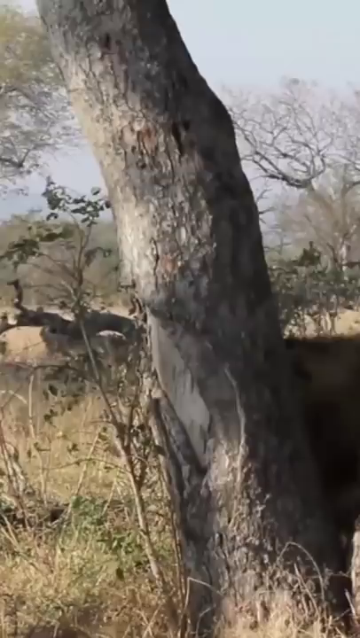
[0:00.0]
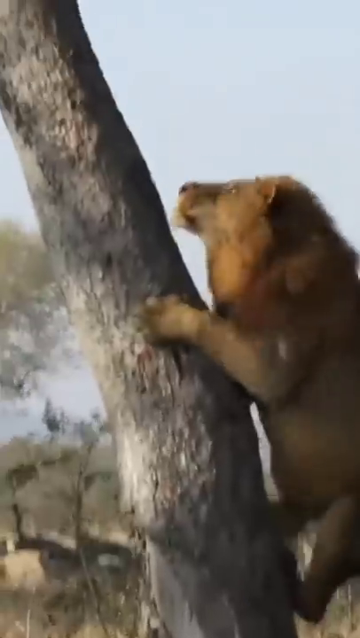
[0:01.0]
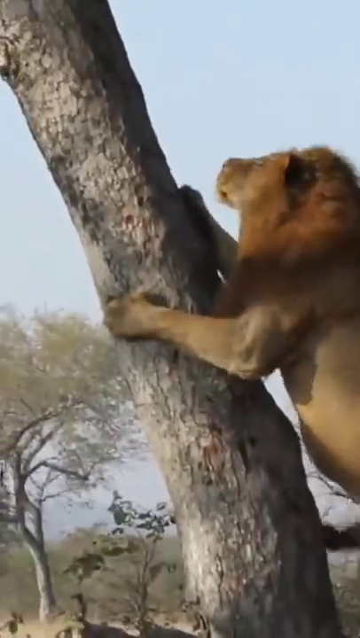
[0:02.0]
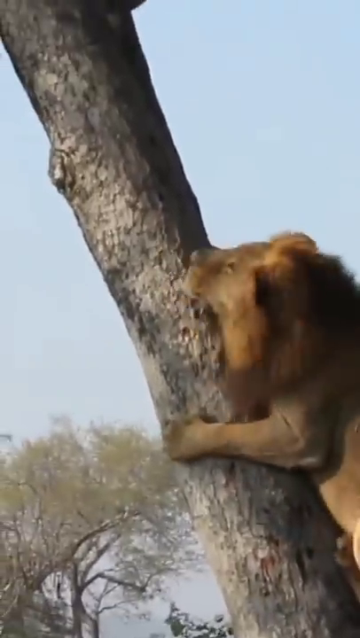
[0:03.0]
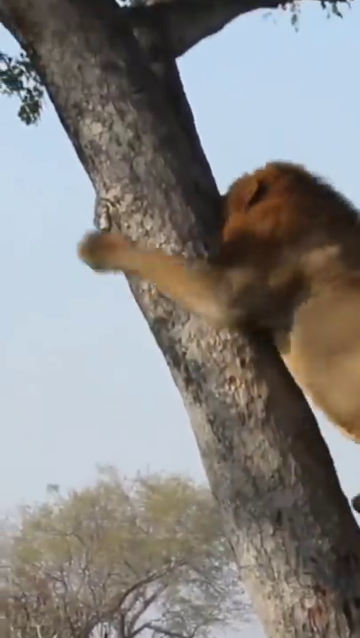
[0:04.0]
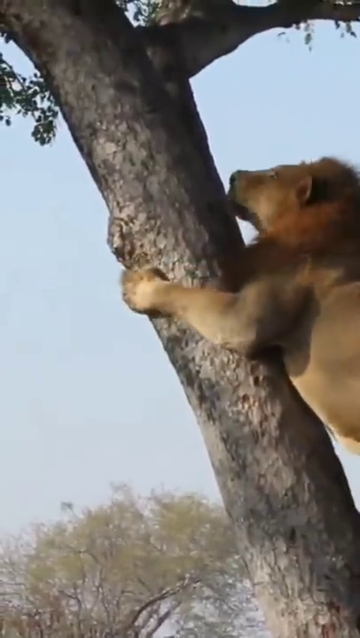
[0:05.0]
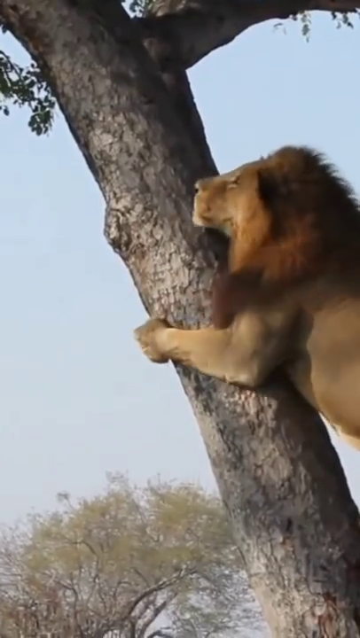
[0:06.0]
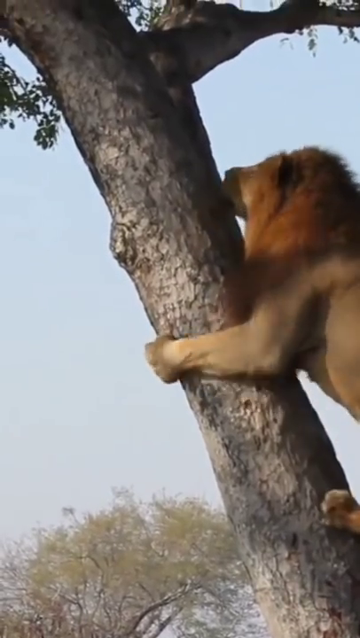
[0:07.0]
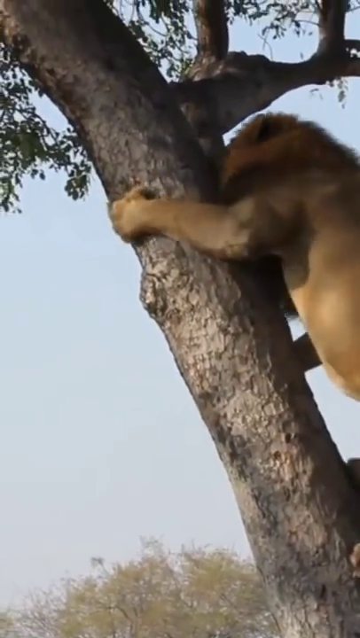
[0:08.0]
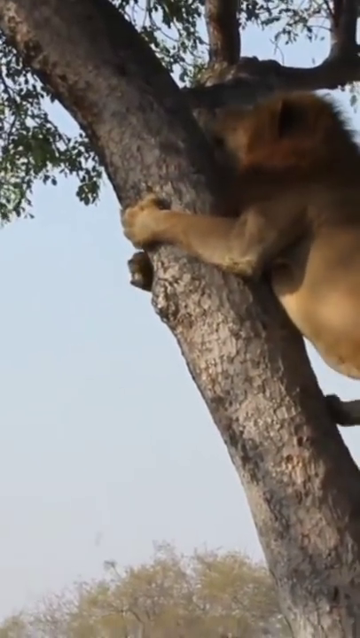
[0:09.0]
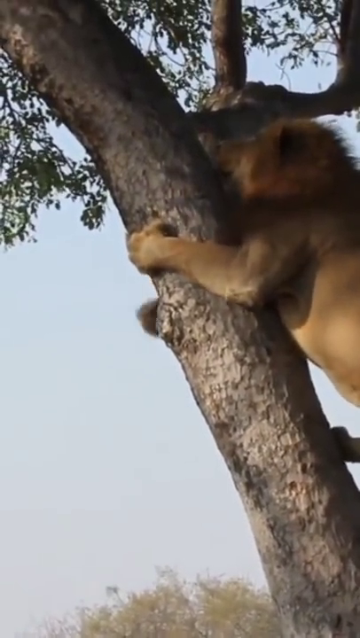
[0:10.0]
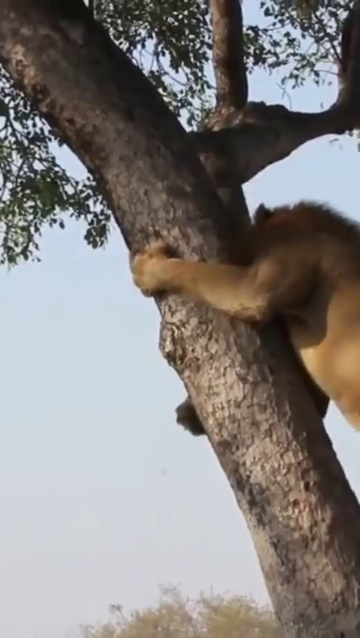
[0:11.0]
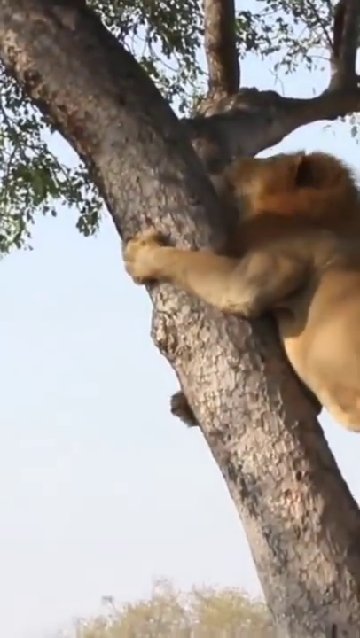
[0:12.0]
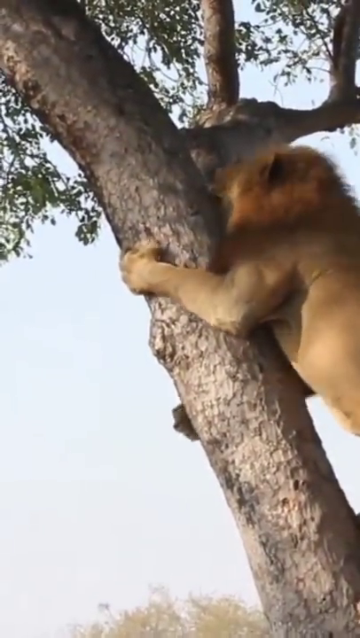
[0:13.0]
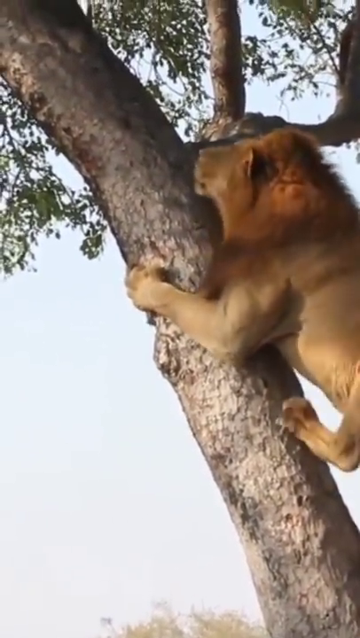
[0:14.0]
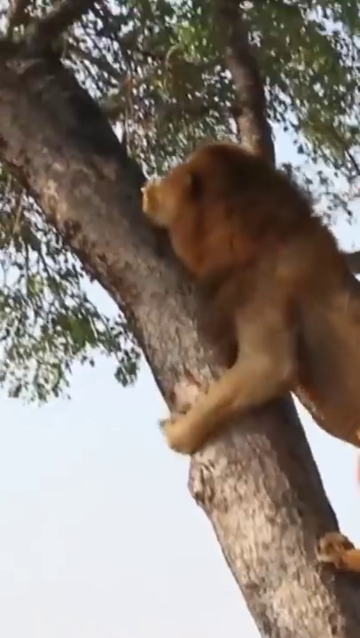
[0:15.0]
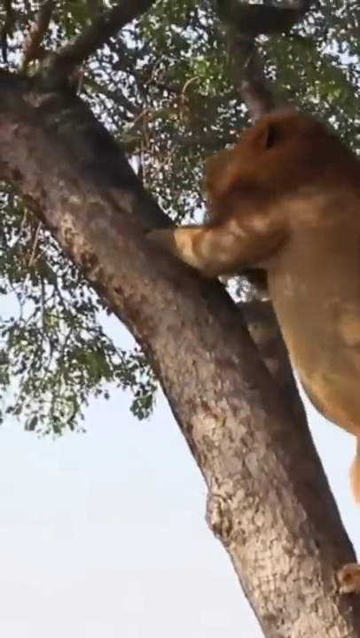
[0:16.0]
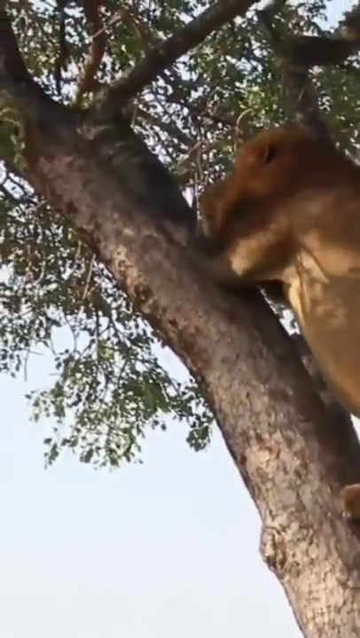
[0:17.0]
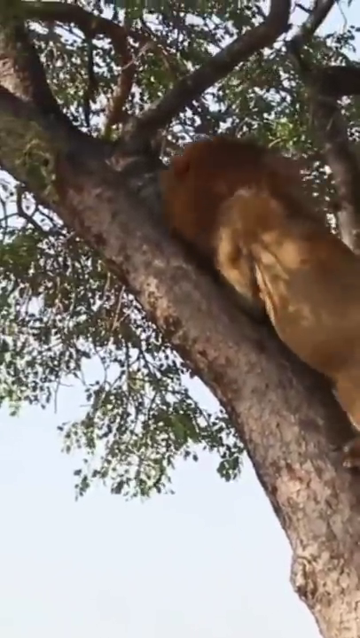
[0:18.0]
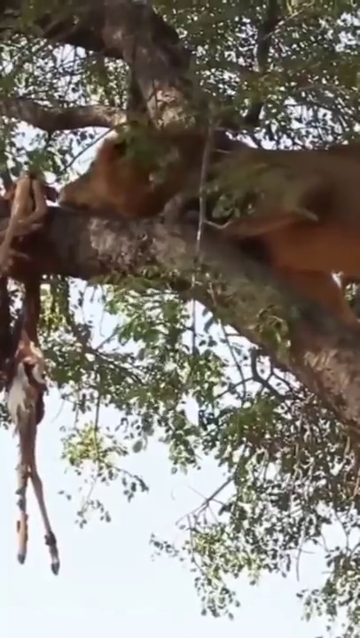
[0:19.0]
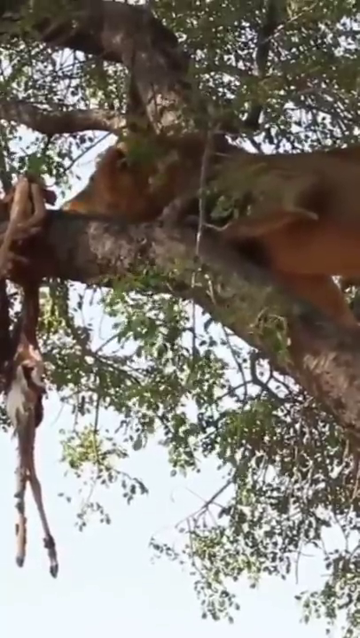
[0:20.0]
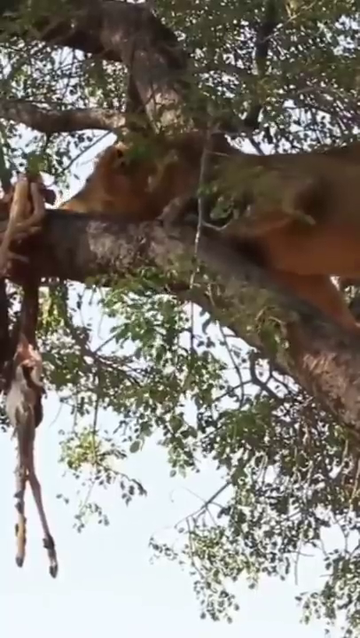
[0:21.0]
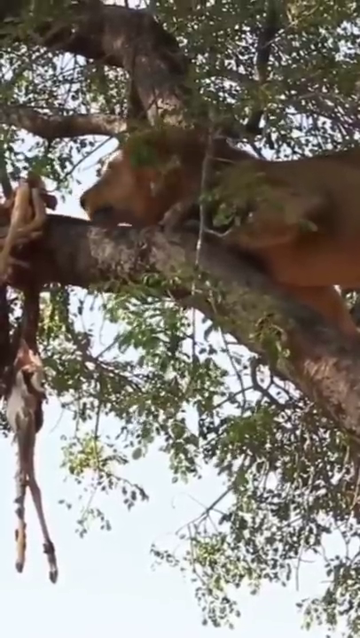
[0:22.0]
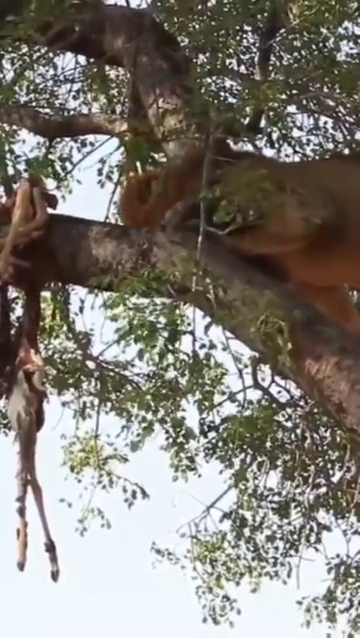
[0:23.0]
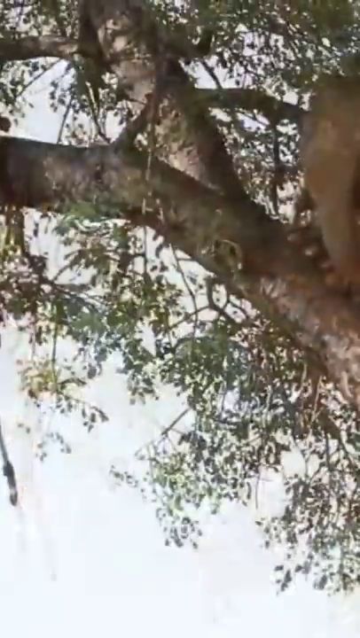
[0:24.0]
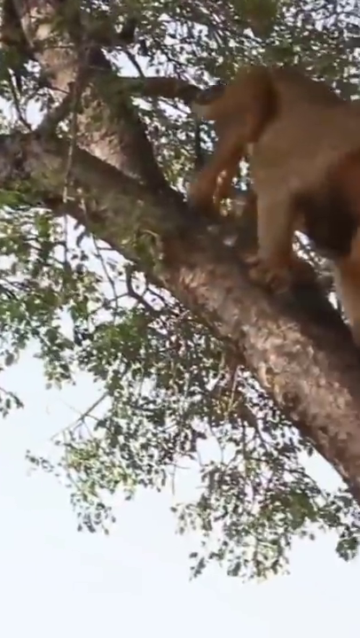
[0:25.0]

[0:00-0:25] The video, titled Lion Climbing Tree for Food #shorts, shows a lion in the savannah in Africa climbing up a tree. It is a male lion with a large mane, very large and bulky-looking. It jumps from the ground onto the side of the tree and then slowly climbs up. The tree is kind of leaning over to one side as it grows, which allows the lion to climb it. As the lion gets higher up into the tree, a gazelle that has been hunted, killed and stashed in the tree, most likely by a leopard, becomes visible. The lion climbs up into the top of the tree and gets to the gazelle.